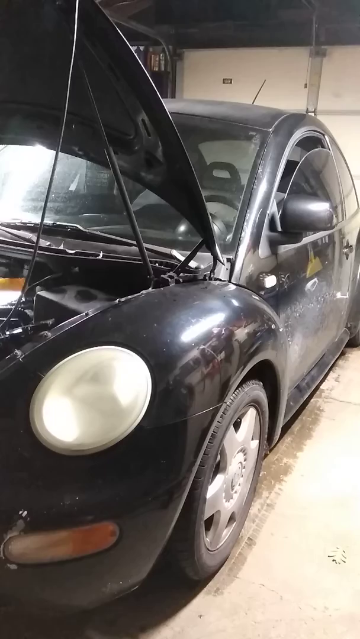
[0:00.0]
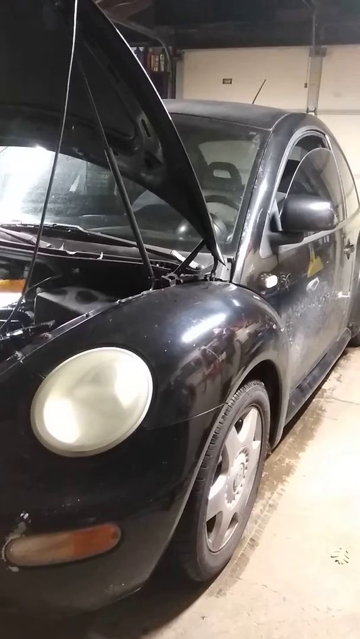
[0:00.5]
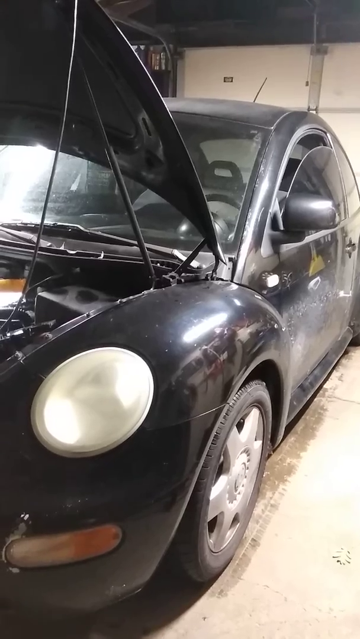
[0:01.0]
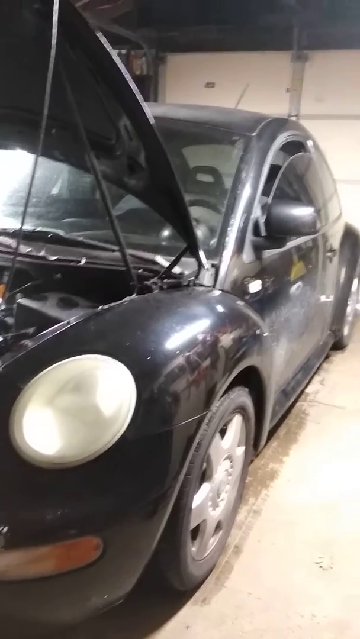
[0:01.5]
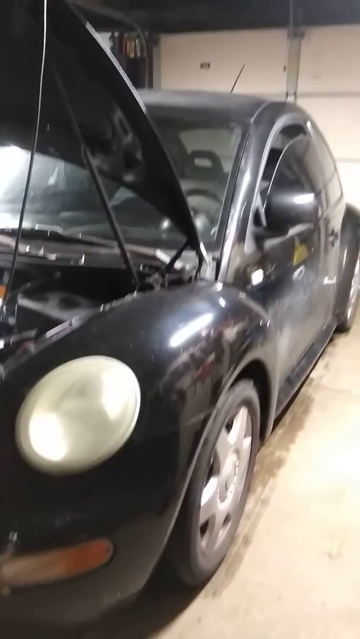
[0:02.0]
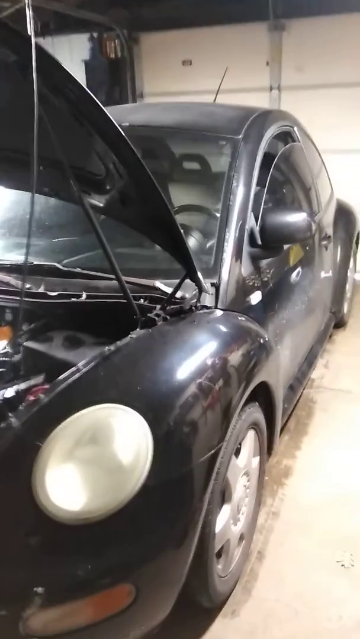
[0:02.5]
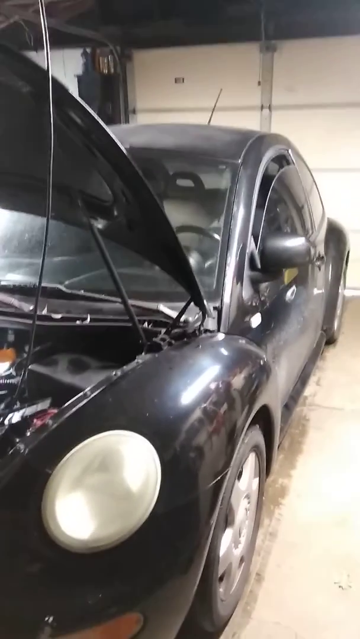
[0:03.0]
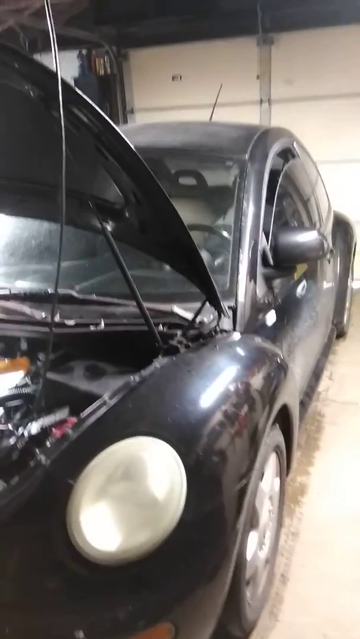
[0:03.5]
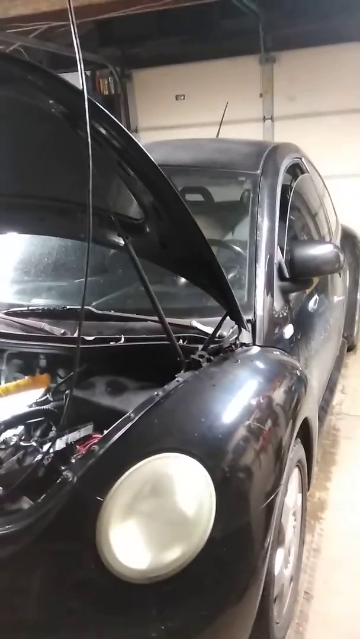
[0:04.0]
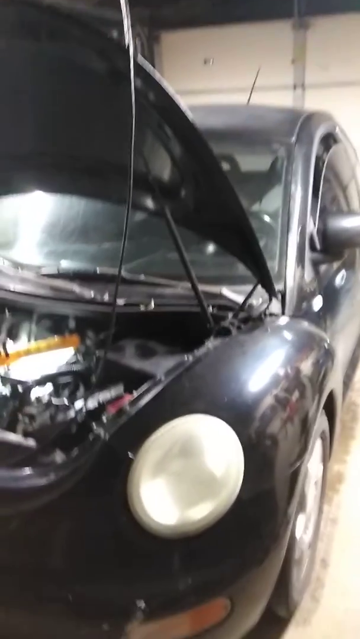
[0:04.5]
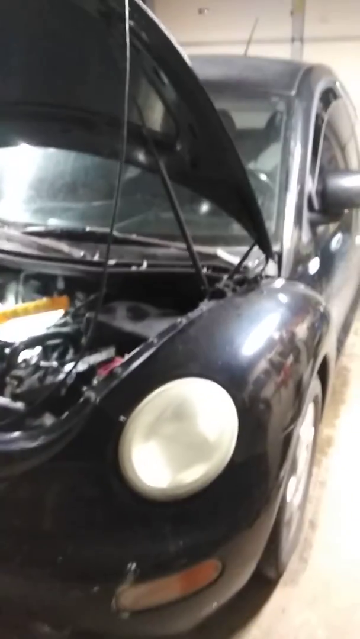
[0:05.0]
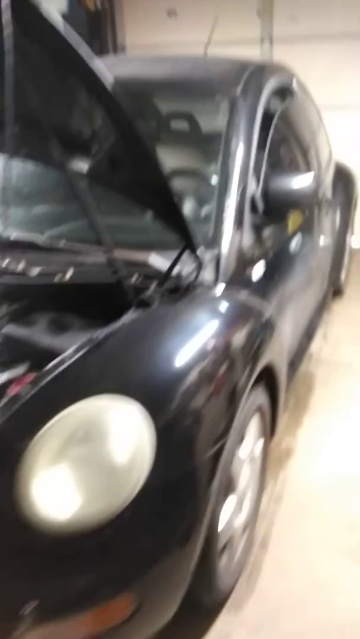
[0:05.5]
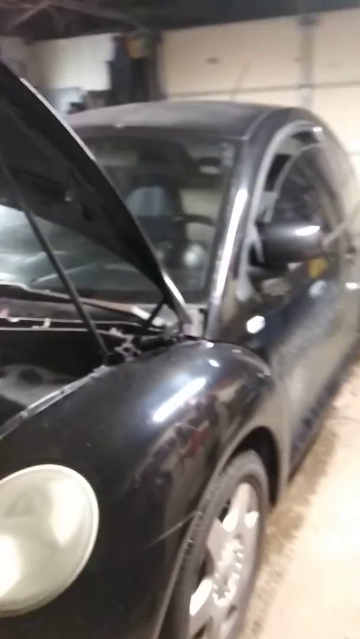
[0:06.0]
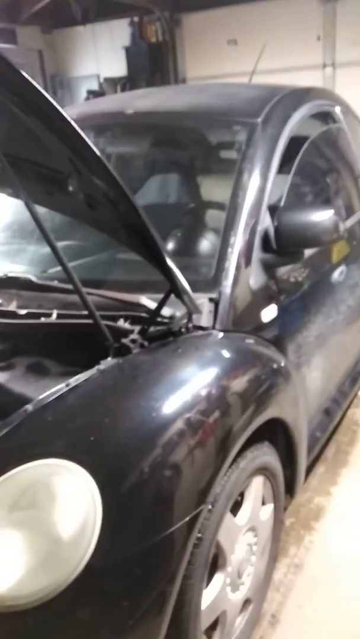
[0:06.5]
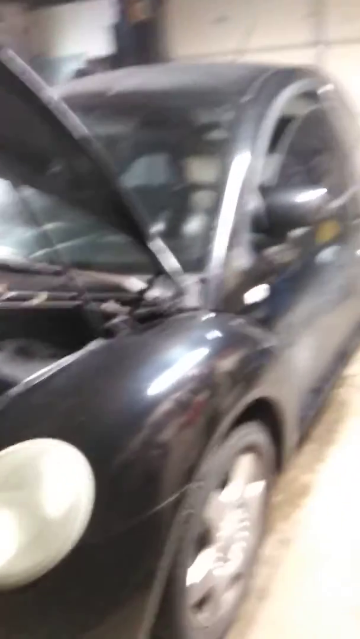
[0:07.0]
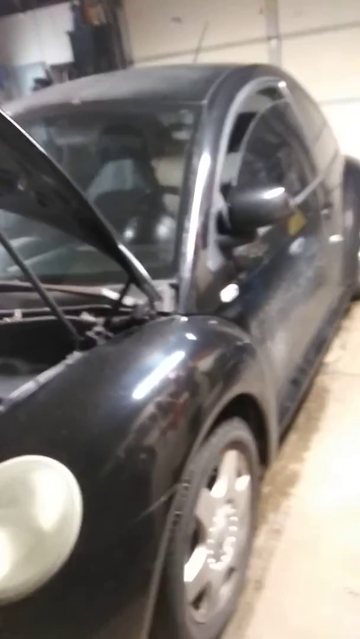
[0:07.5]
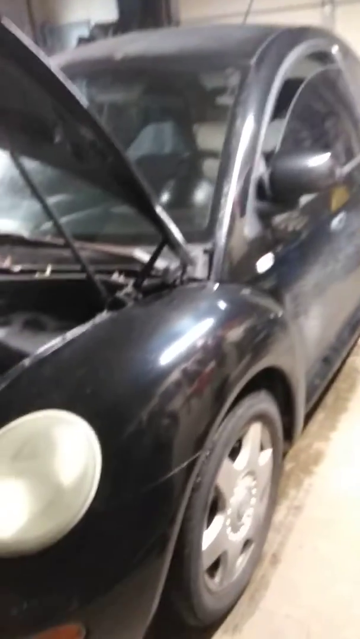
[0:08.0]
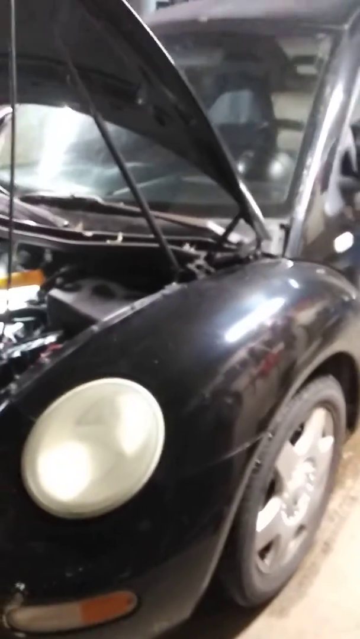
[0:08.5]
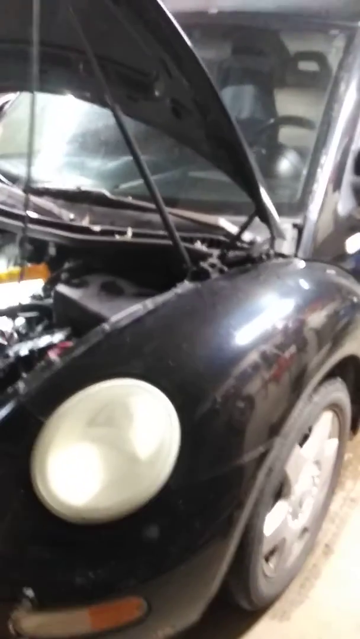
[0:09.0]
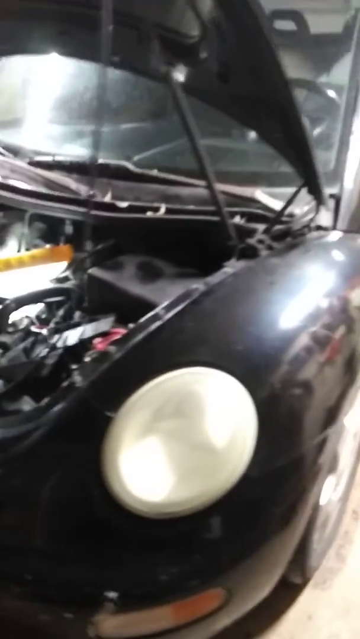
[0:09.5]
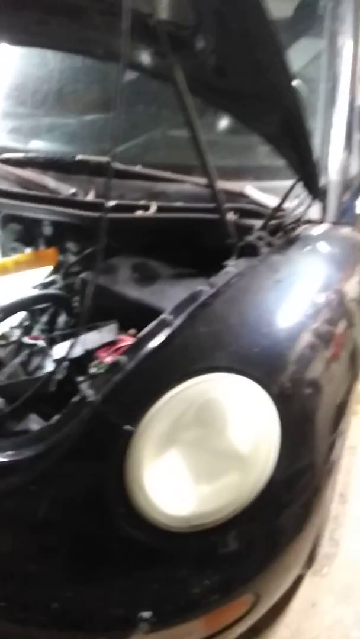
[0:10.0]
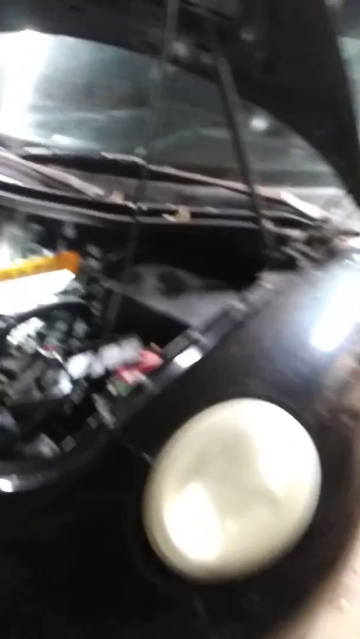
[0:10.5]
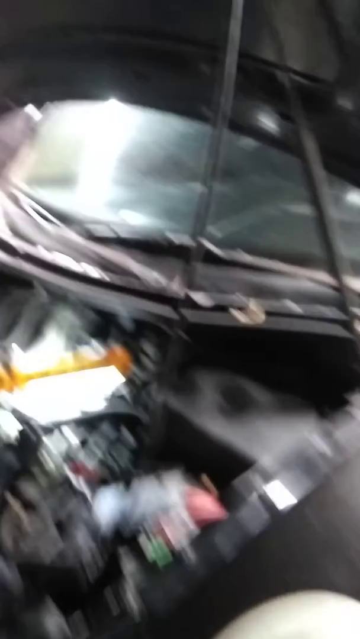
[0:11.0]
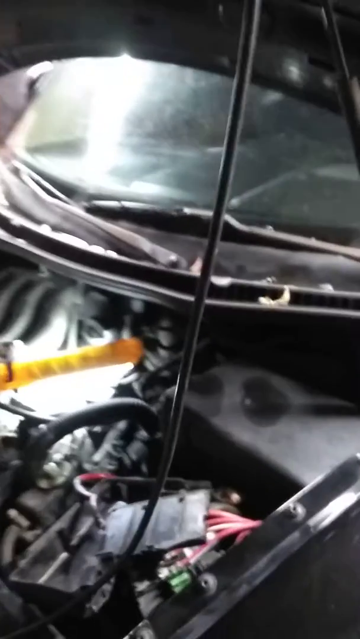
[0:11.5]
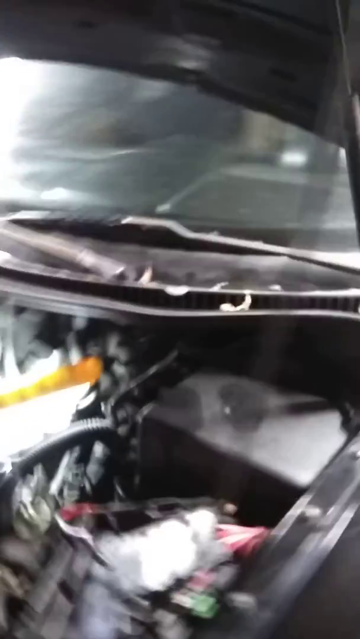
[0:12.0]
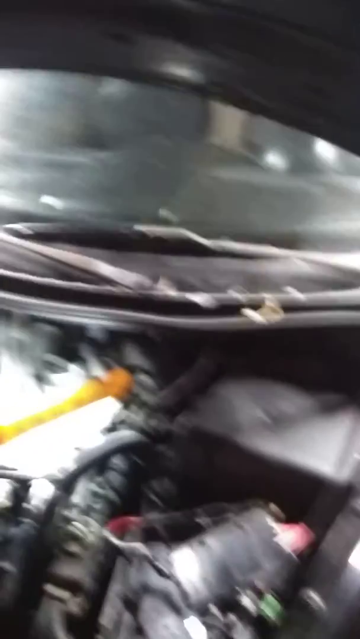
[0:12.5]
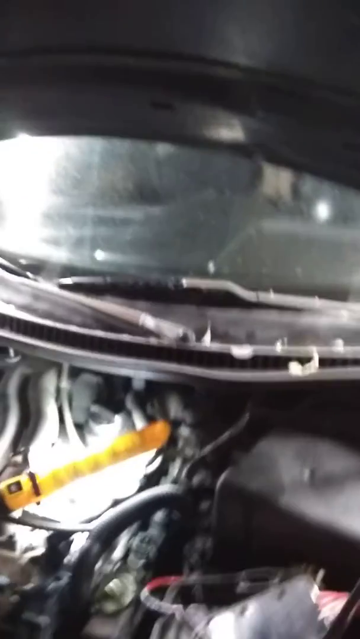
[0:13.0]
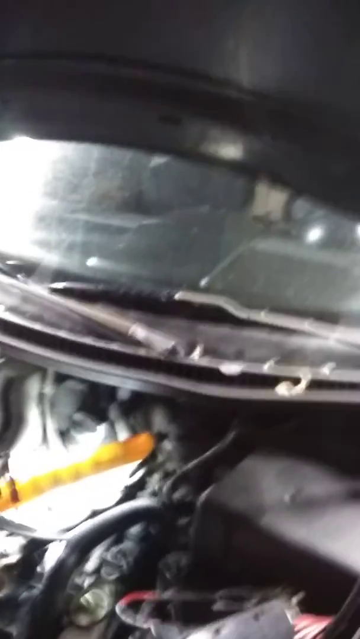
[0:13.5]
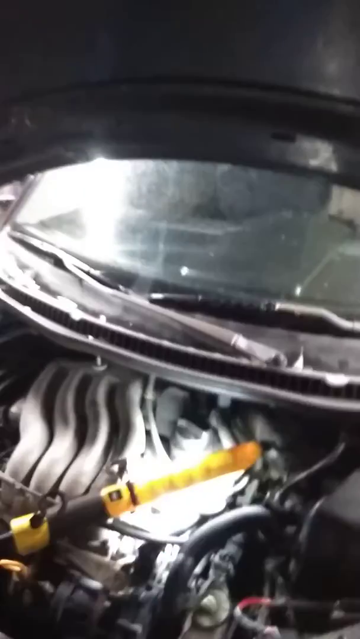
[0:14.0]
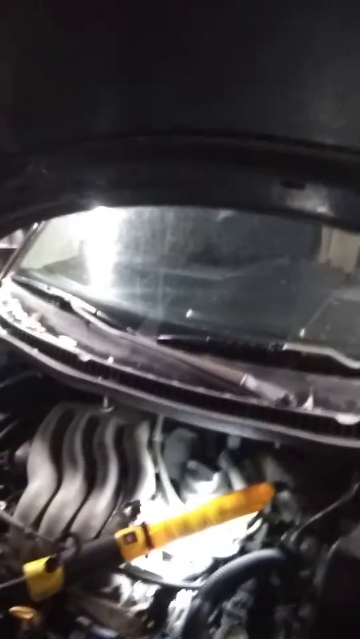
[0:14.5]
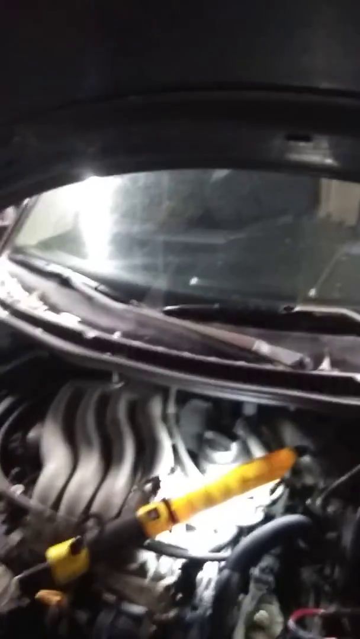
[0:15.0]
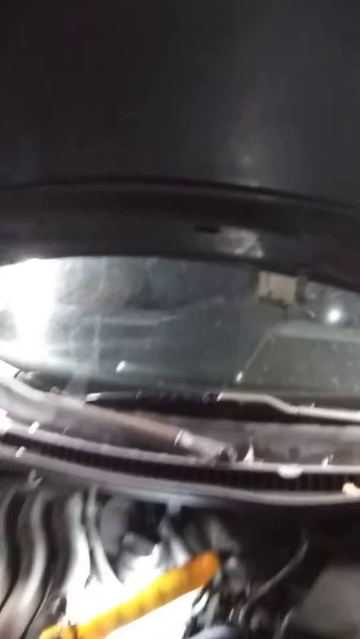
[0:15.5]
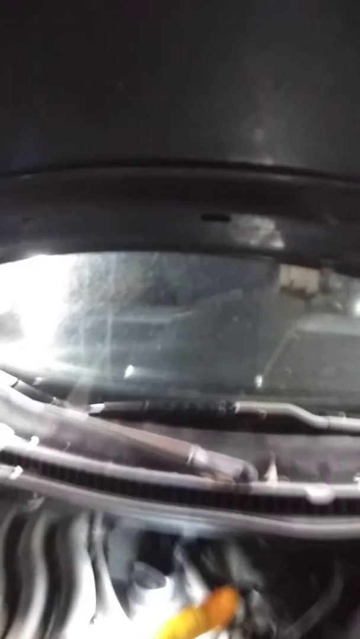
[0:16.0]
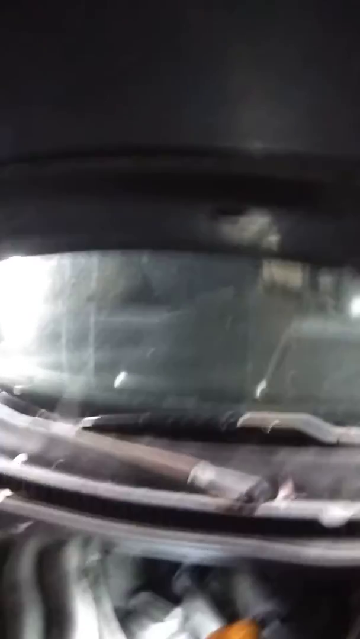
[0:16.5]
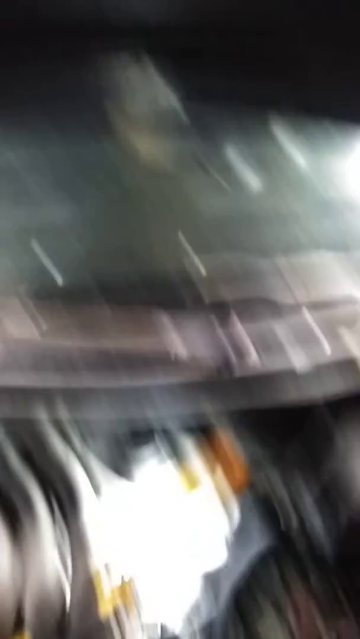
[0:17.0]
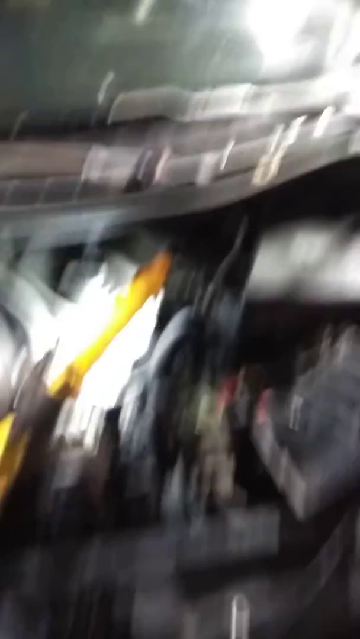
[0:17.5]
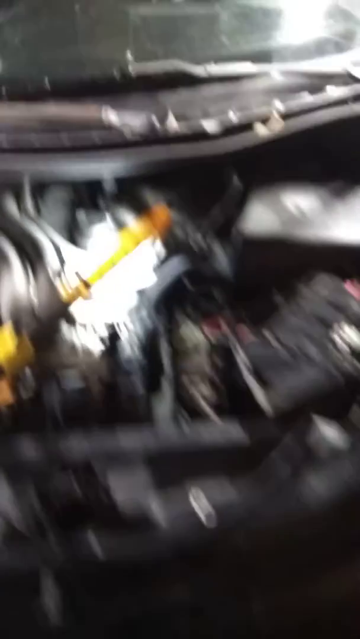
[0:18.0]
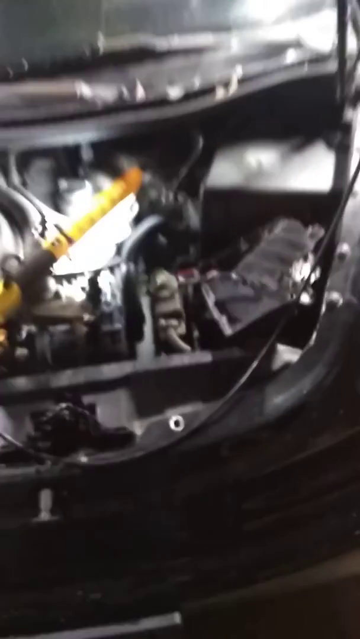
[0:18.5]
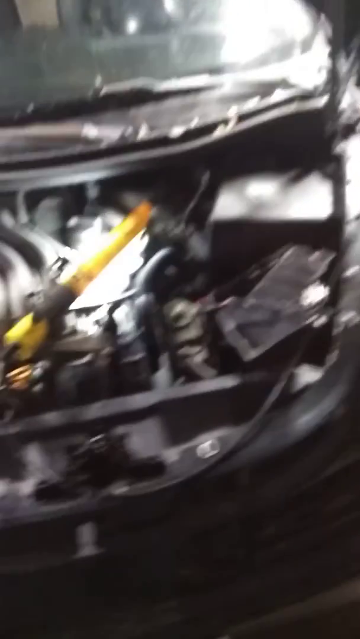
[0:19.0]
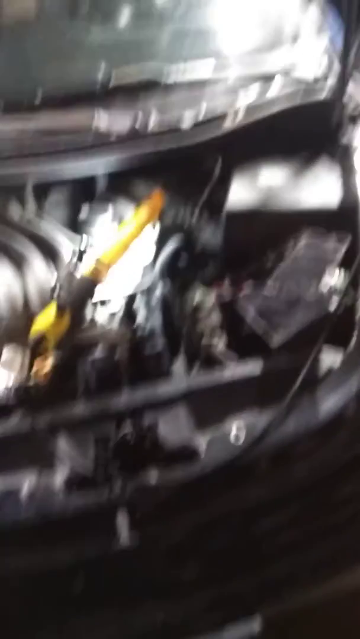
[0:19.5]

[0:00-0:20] A black car stands with its front bonnet open, and the left-hand window on the driver's side is slightly ajar. The car appears to have a Beetle sort of shape, perhaps a Volkswagen Beetle. The person holding the camera starts on the right-hand side and looks along the front left of the car, as if from the driver's perspective. The front left headlight is a white oval shape that appears to be sort of white paint. The camera comes around to look inside the engine. A windscreen is visible in the background; it is very dirty, smeared, messy and almost greasy. In the engine there appears to be some sort of yellow piece of metal, resembling the device put on a steering wheel to stop it being stolen, apparently some sort of security apparatus.